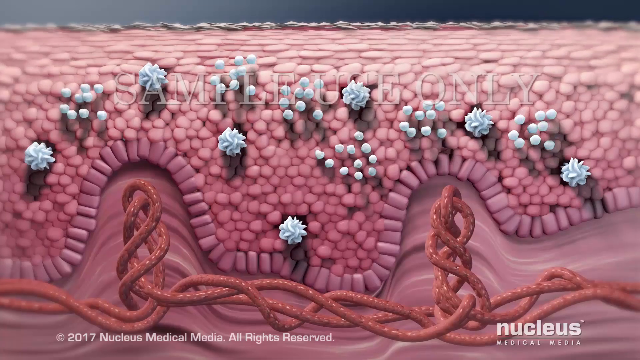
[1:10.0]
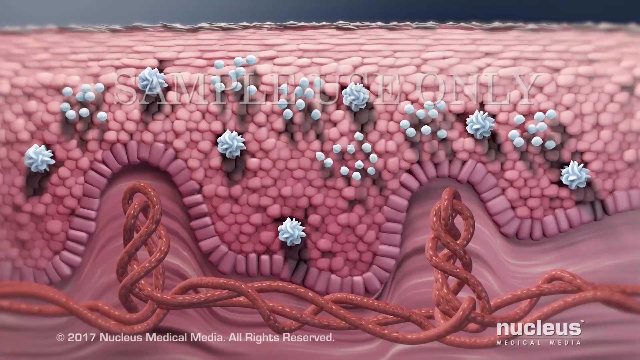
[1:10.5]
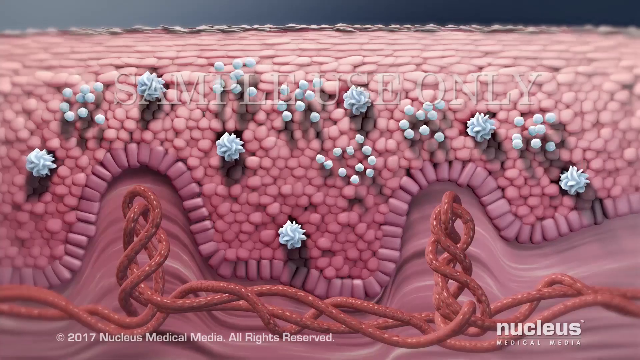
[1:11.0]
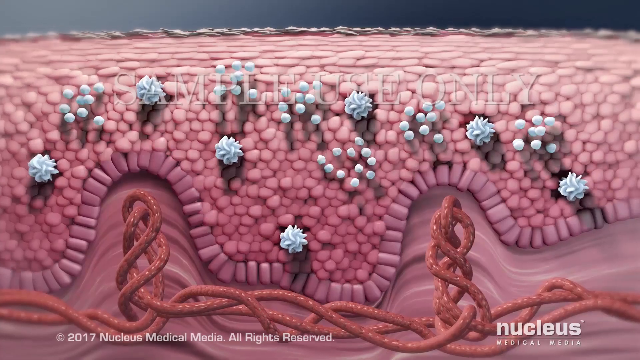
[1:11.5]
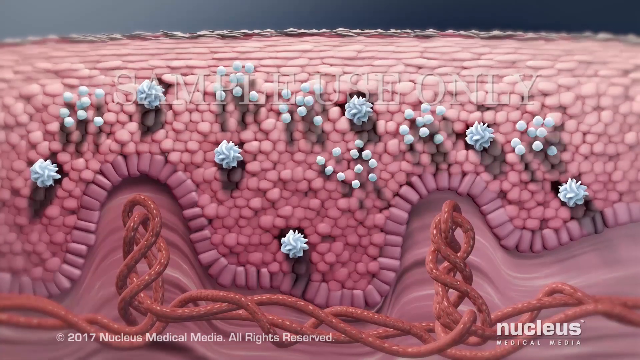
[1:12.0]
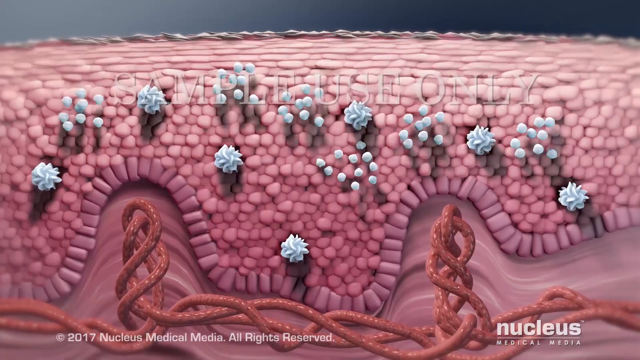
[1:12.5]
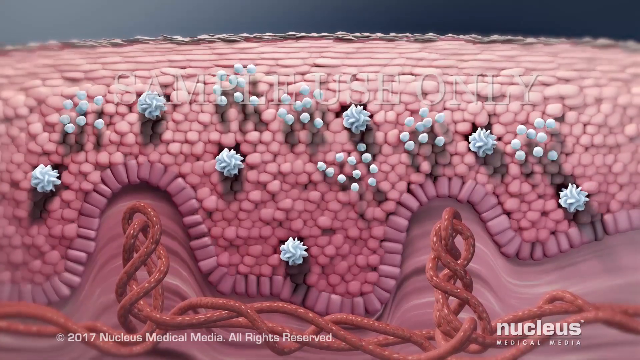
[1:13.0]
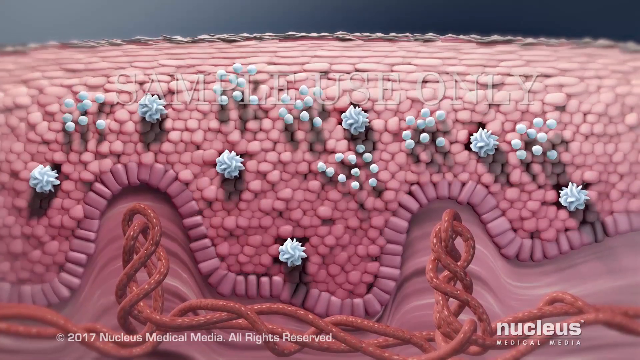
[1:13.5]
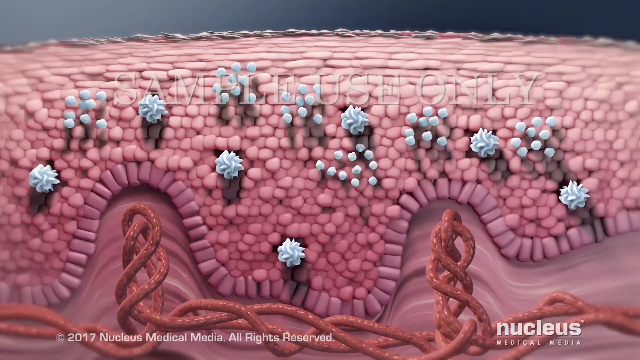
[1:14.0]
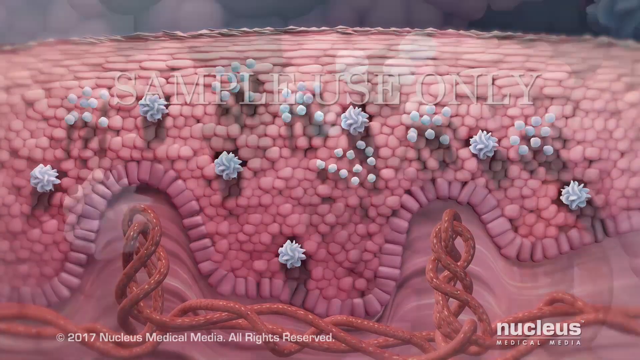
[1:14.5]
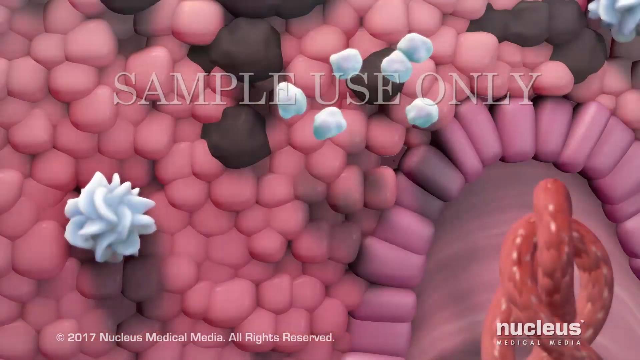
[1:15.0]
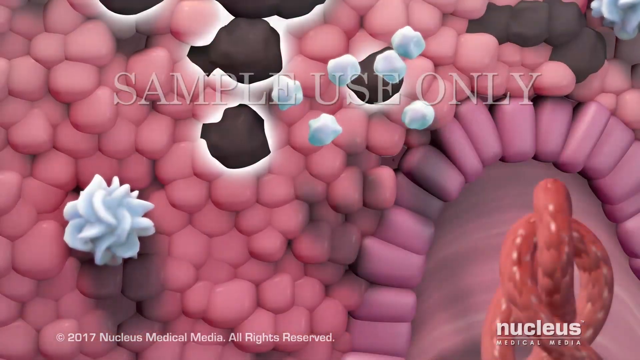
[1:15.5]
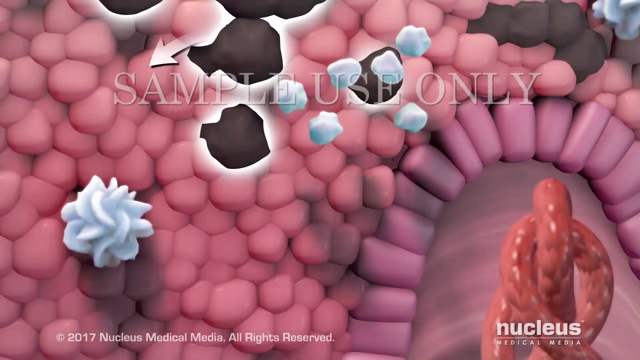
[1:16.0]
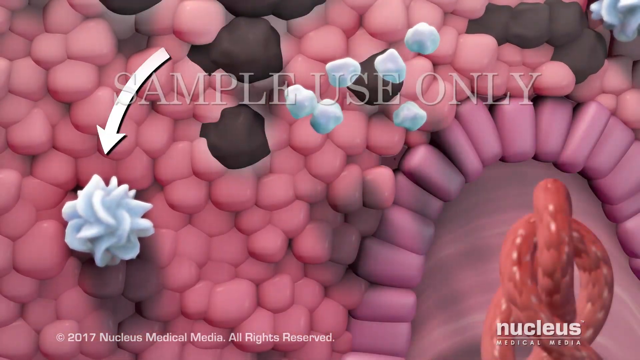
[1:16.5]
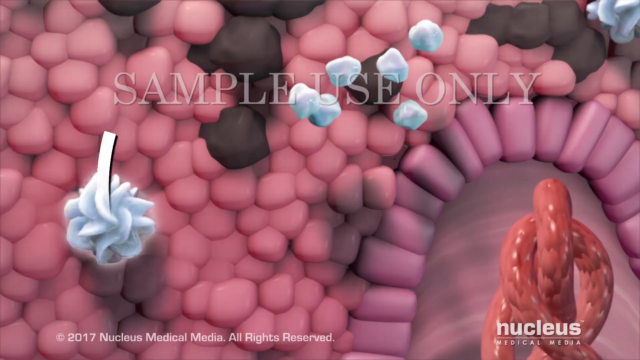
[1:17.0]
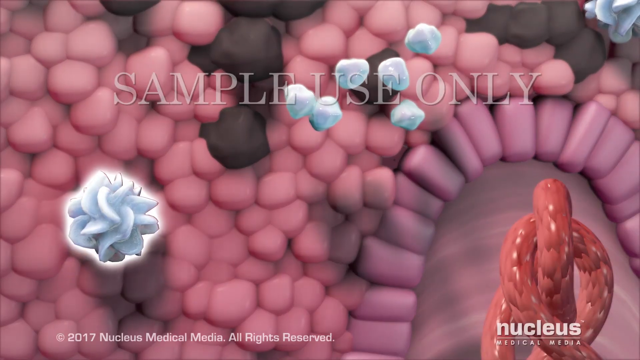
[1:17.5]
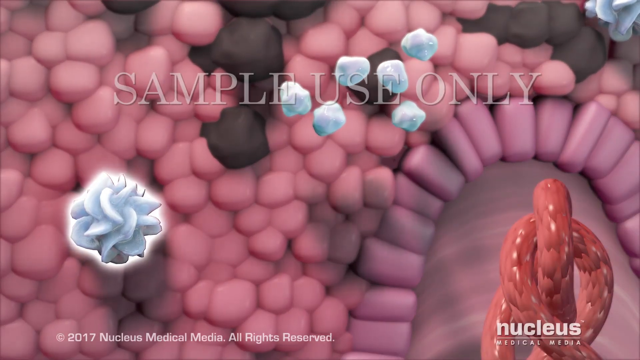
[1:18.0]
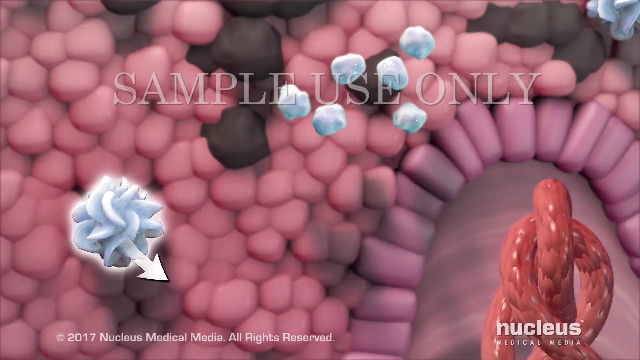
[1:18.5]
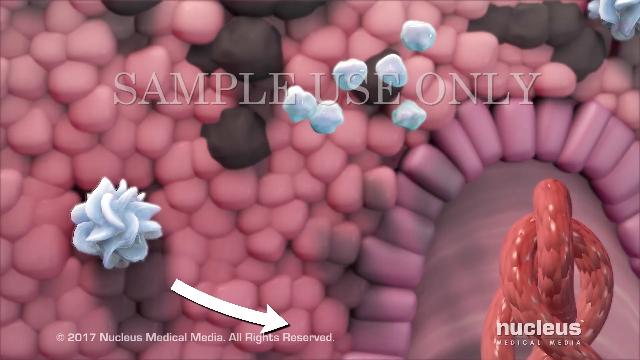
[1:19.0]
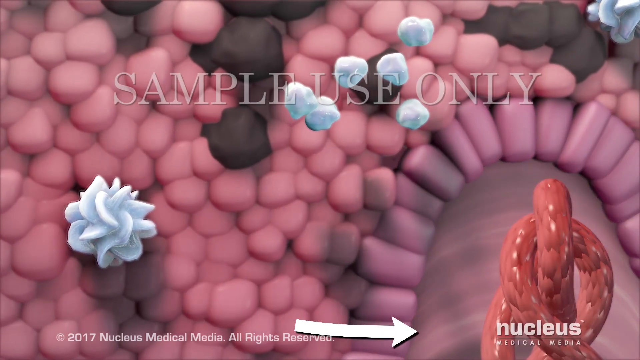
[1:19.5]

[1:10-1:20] The "sample use only" overlay remains, along with the indication that the video is from 2017, from Nucleus. The animation continues showing the spread of the infection, bacteria or virus, which seems to multiply repeatedly and reach the surface of the skin. Certain cells are shown moving in a certain direction, including darker-looking cells, and an arrow points toward the immune cells. Things appear to bubble up to the surface of the skin.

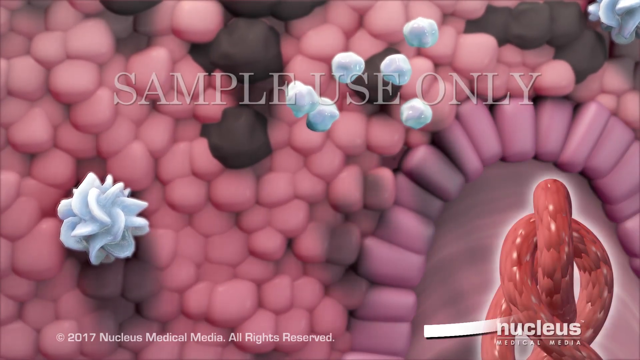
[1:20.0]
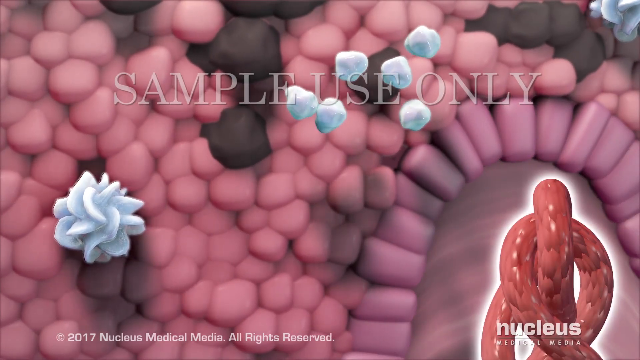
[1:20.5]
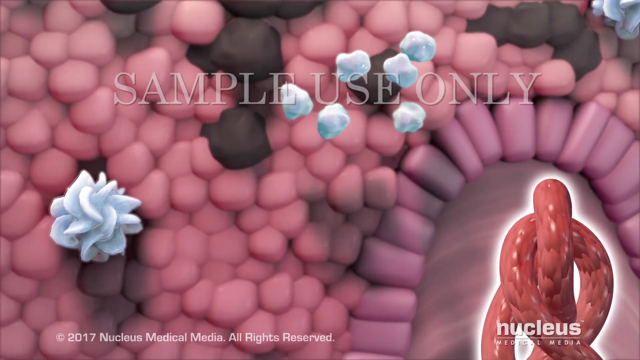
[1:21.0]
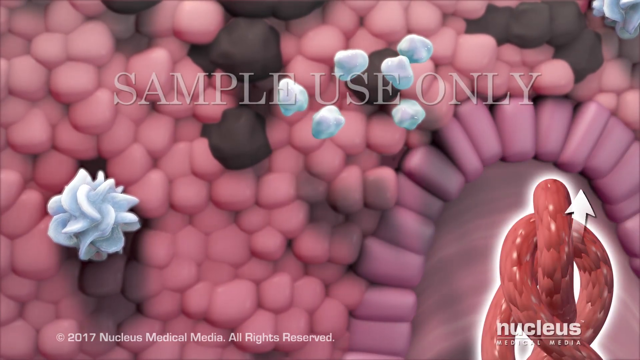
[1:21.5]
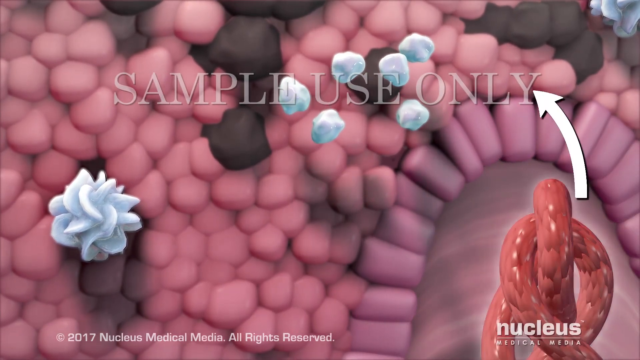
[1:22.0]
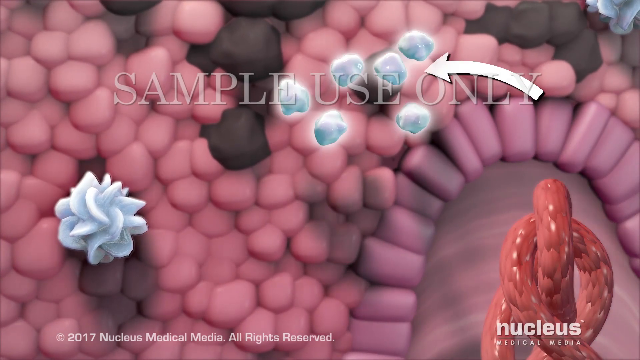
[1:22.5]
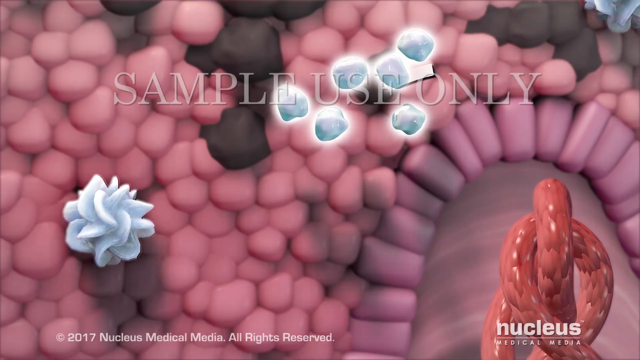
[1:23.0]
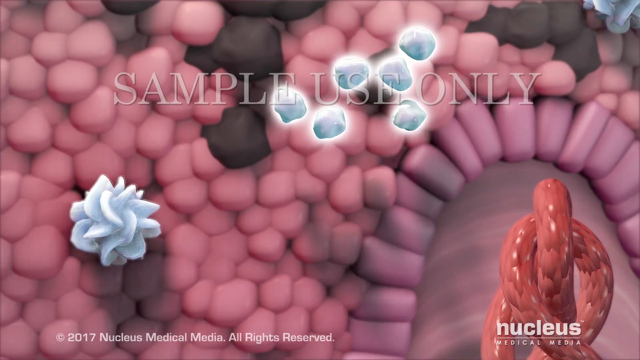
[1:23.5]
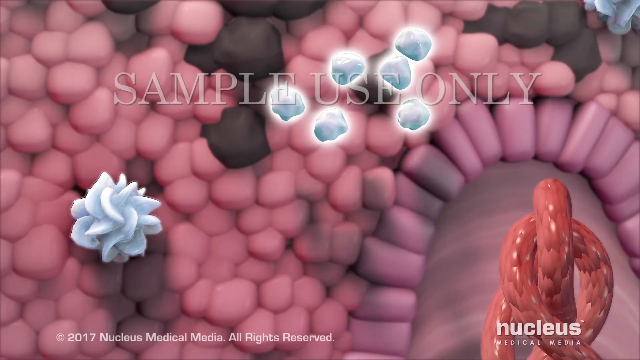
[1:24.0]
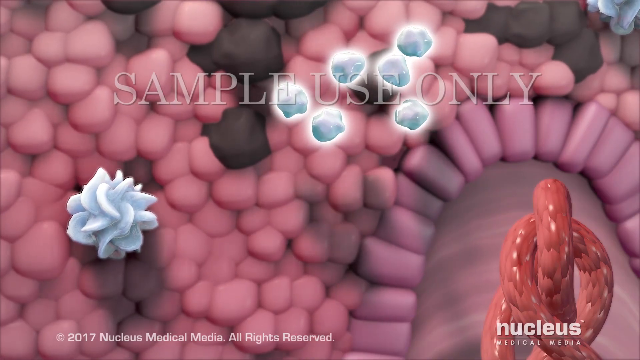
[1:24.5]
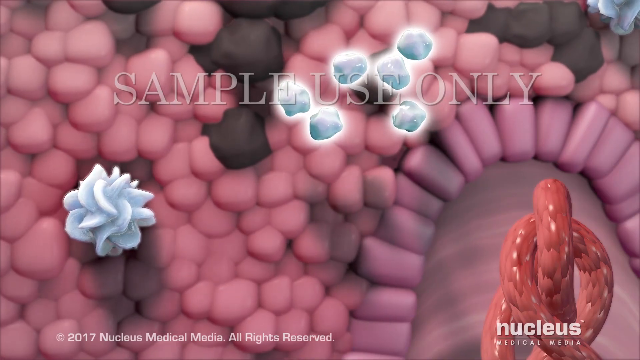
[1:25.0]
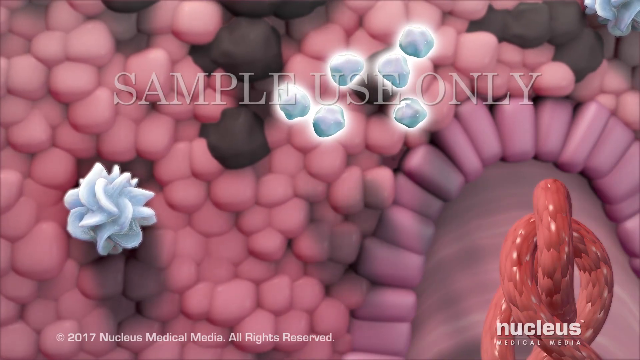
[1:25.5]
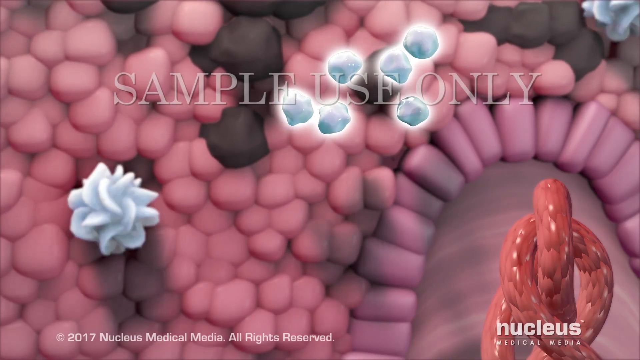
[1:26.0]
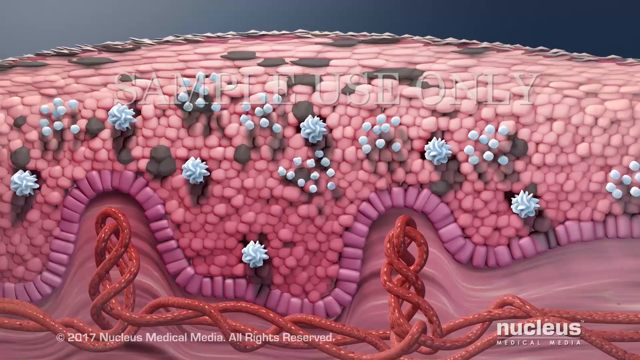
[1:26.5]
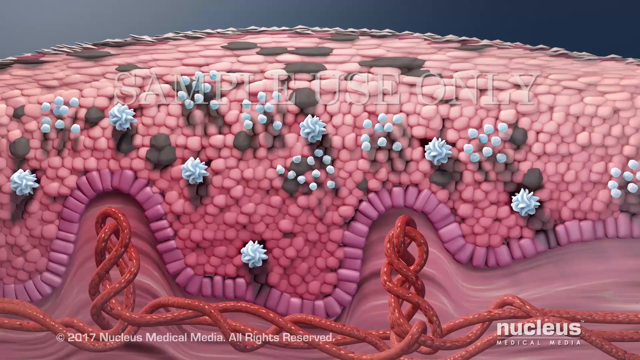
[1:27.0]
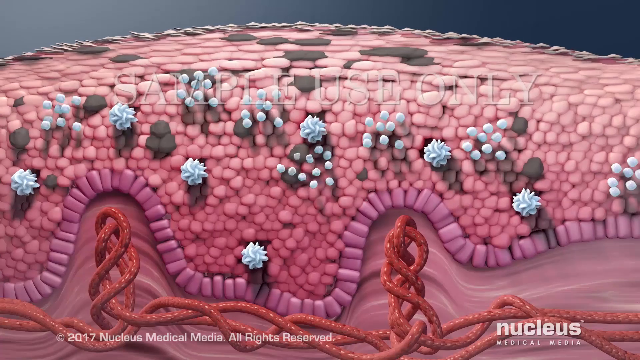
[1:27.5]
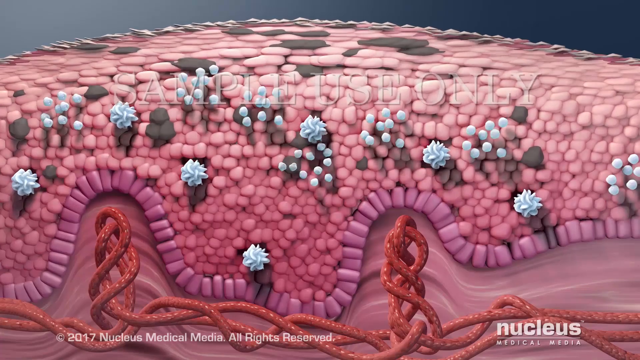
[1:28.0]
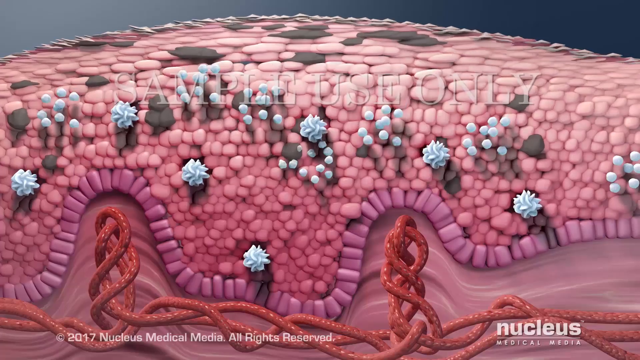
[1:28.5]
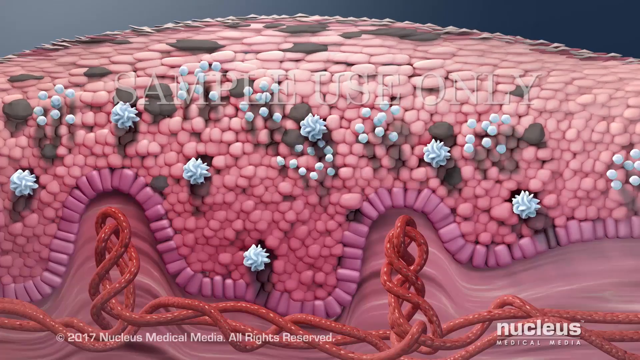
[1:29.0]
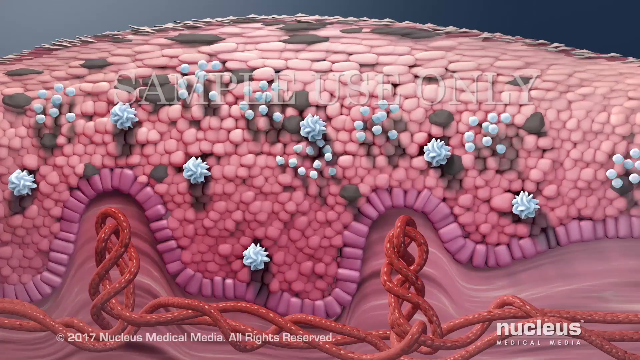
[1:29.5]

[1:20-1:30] An arrow points back and forth between the immune cells and possibly the blood vessels or veins under the skin, showing what looks like a continuing cycle. Things appear to reach the surface of the skin and cause discoloration. Darker-looking cells, apparently infected, are visible, and the body possibly tries to respond, in what looks almost like a back-and-forth cycle of spreading and growing and the body attacking.